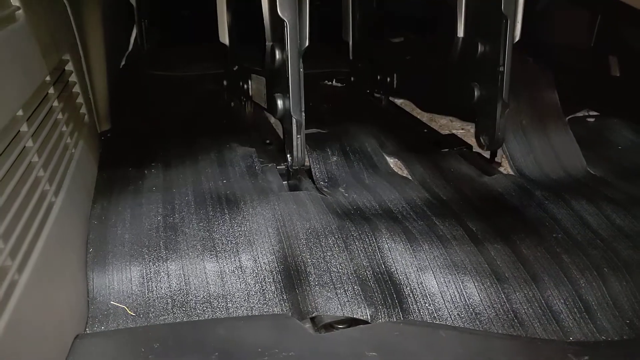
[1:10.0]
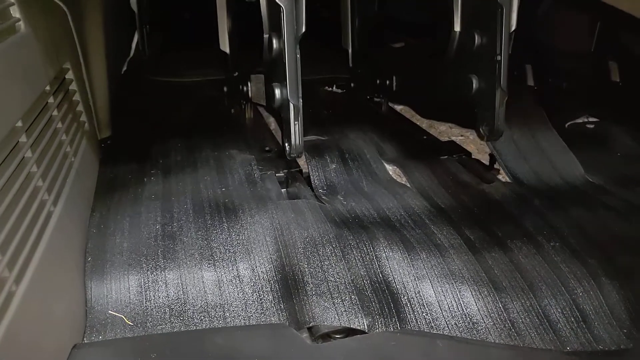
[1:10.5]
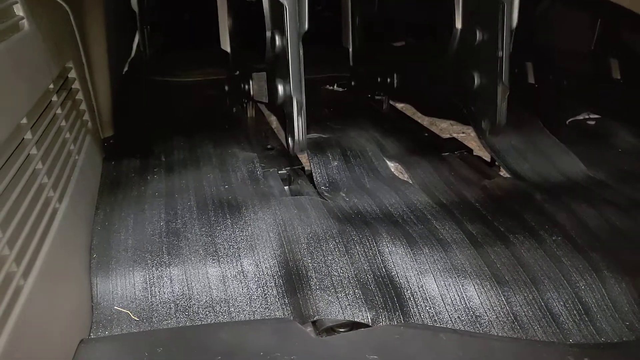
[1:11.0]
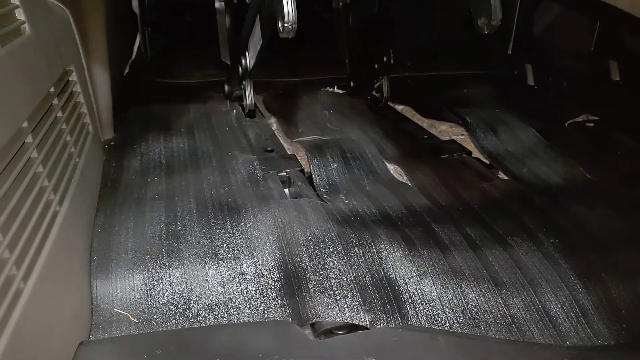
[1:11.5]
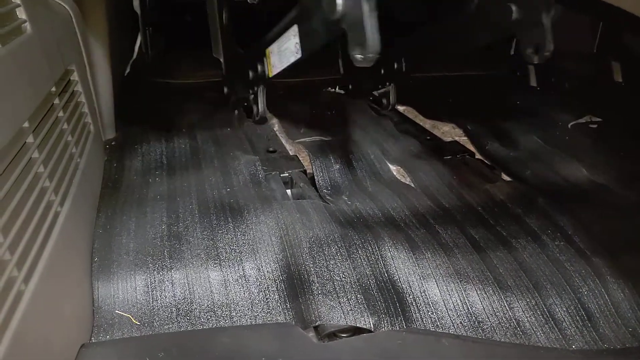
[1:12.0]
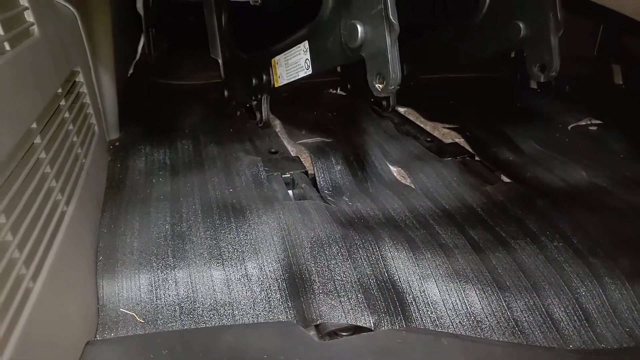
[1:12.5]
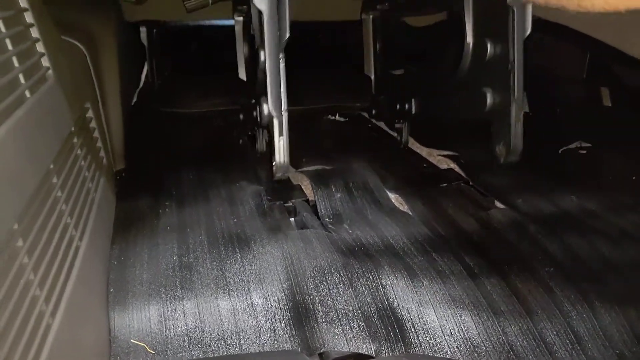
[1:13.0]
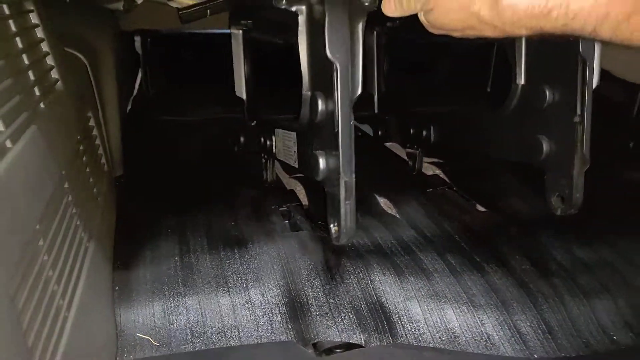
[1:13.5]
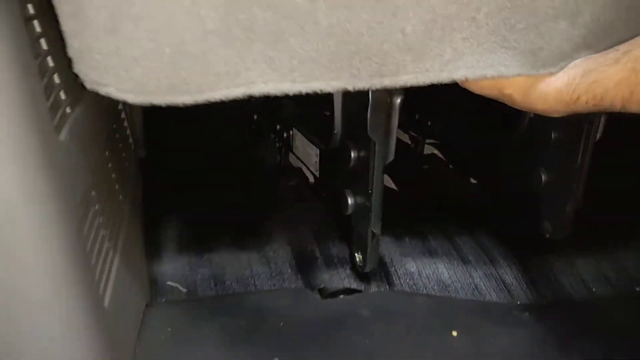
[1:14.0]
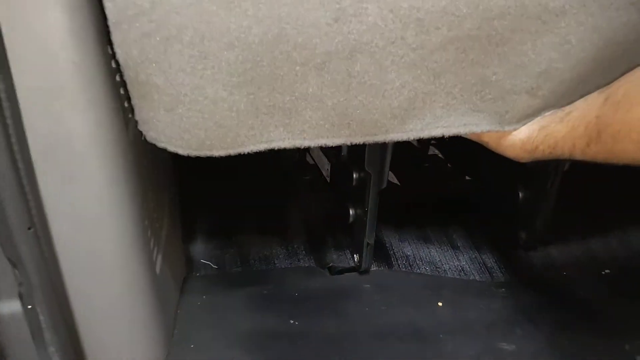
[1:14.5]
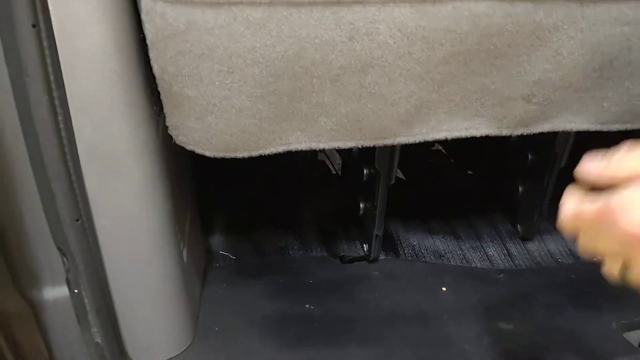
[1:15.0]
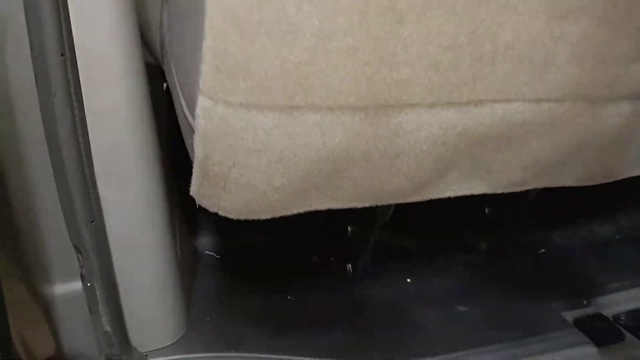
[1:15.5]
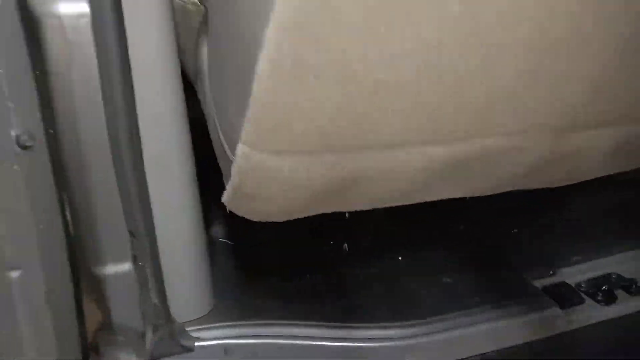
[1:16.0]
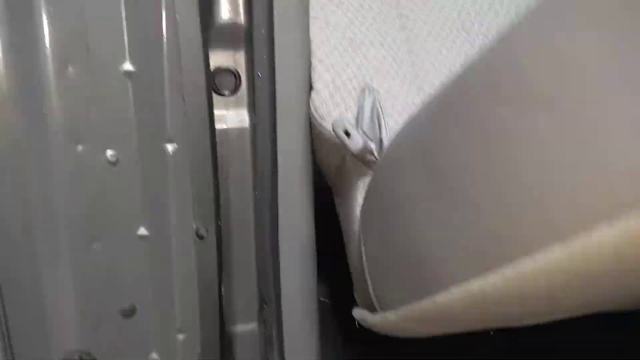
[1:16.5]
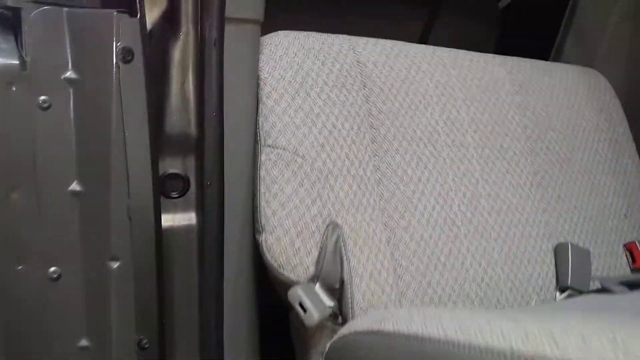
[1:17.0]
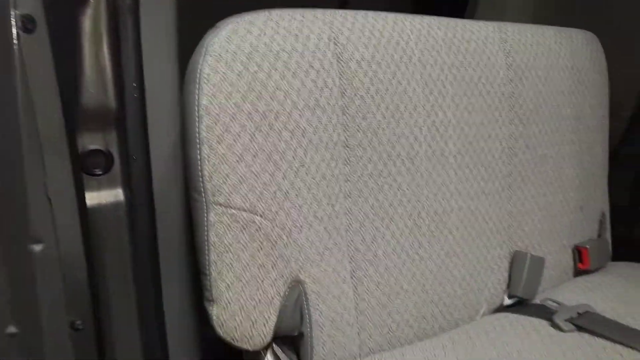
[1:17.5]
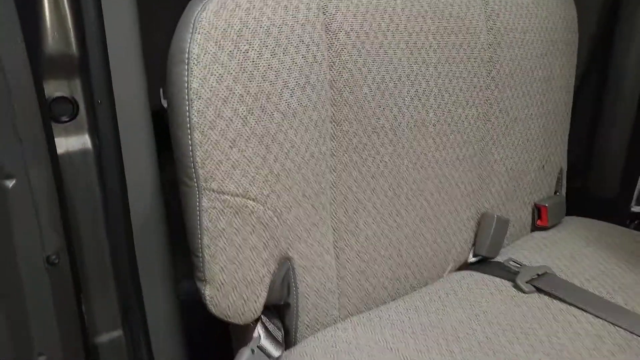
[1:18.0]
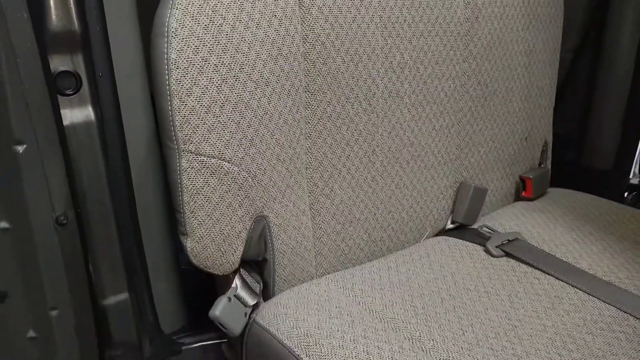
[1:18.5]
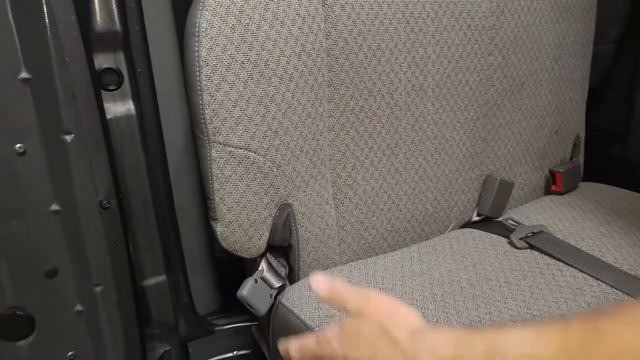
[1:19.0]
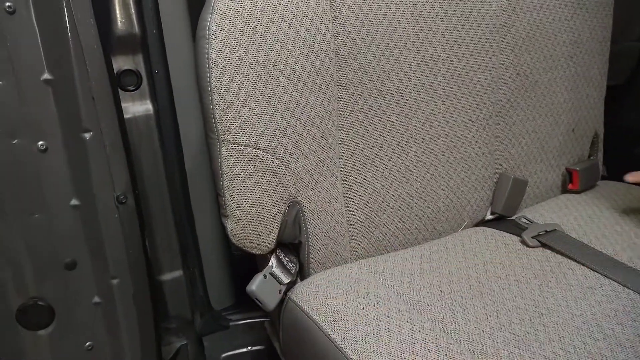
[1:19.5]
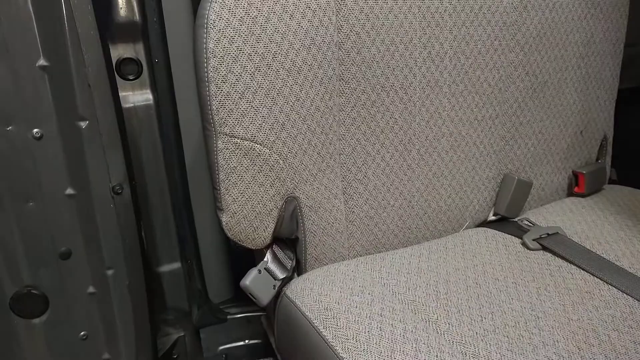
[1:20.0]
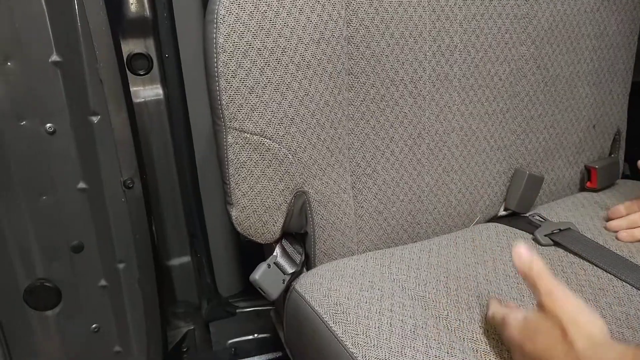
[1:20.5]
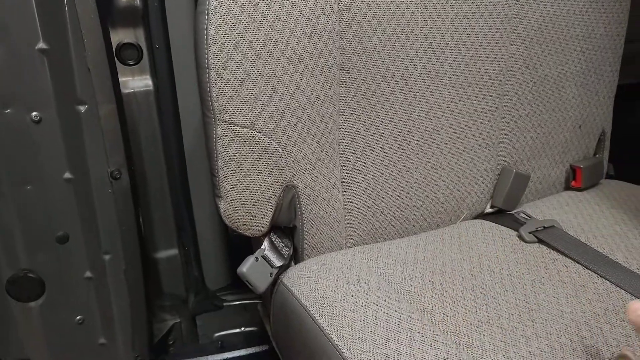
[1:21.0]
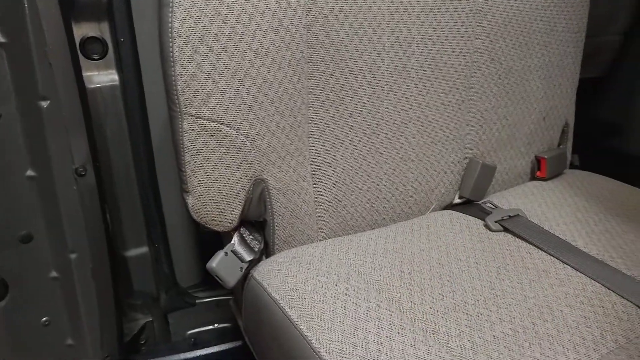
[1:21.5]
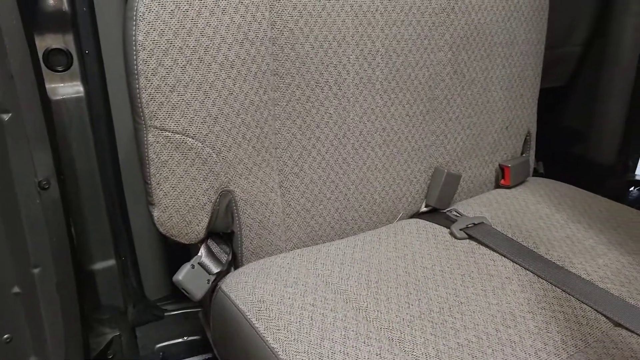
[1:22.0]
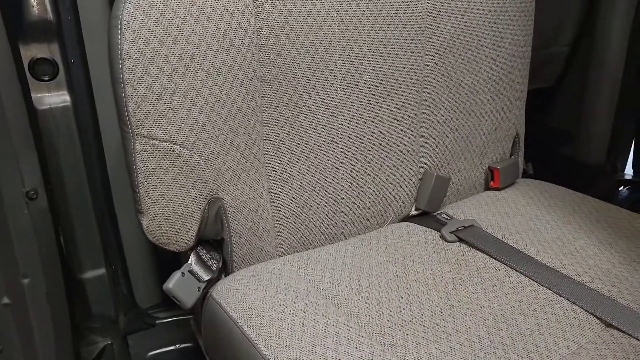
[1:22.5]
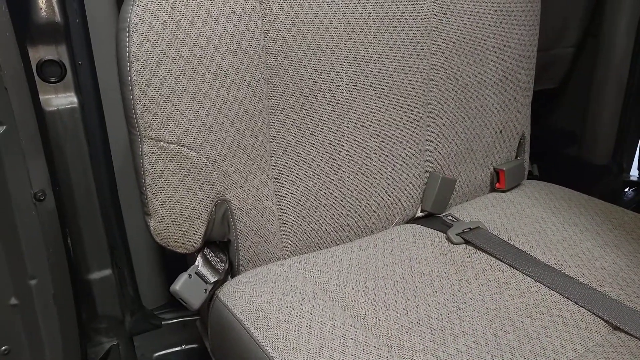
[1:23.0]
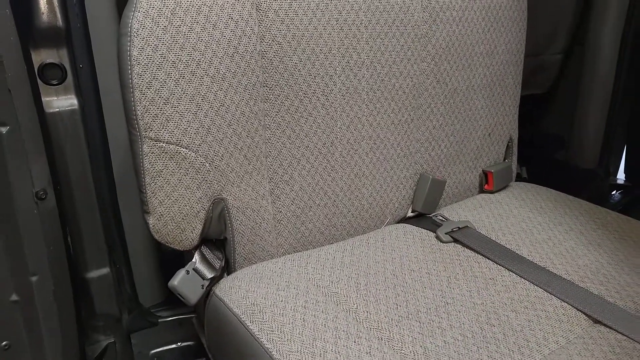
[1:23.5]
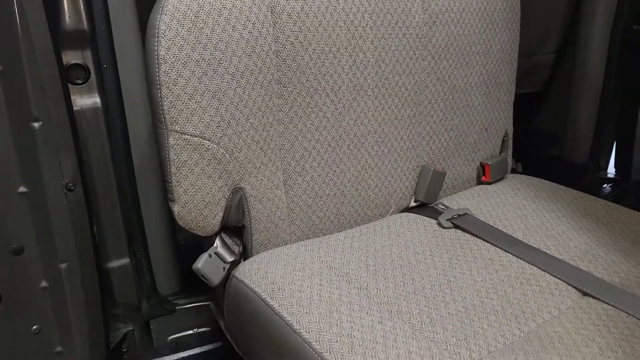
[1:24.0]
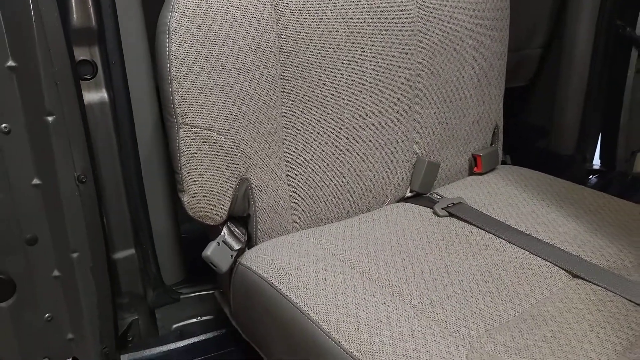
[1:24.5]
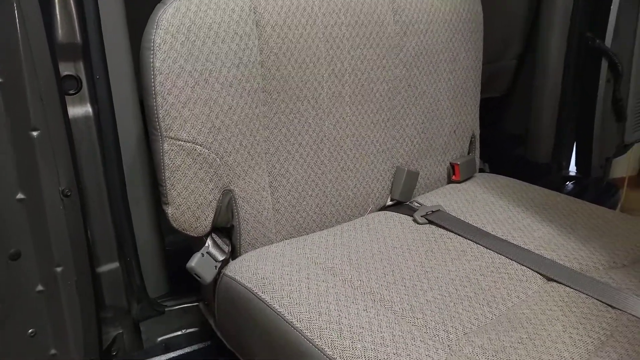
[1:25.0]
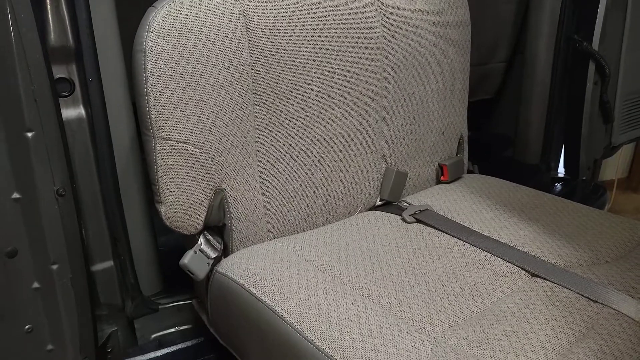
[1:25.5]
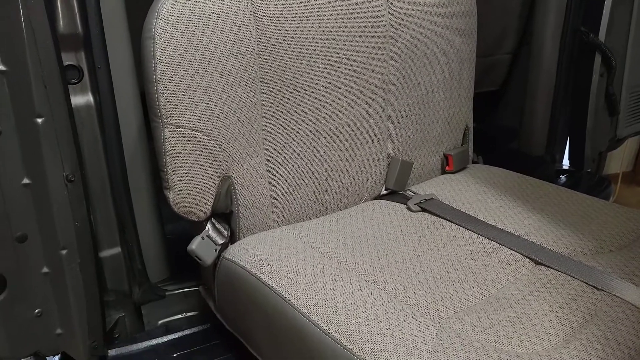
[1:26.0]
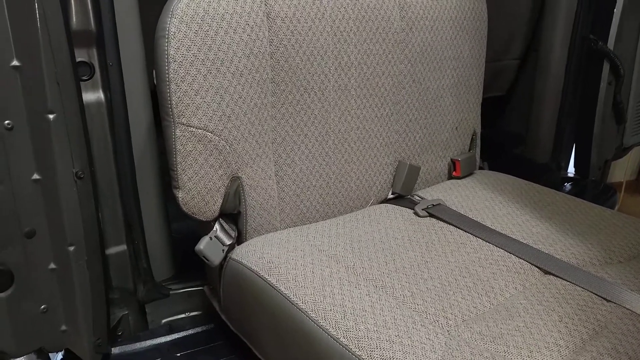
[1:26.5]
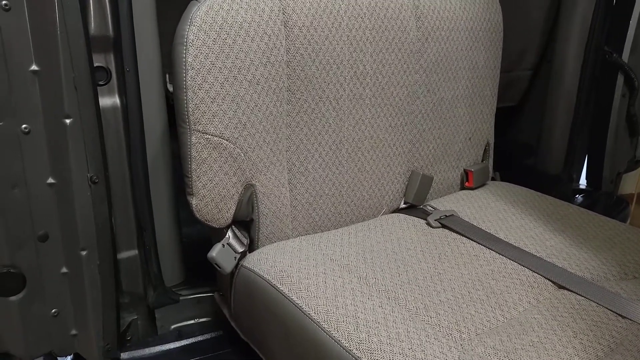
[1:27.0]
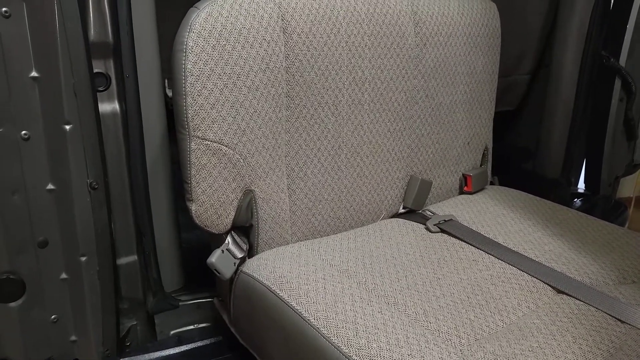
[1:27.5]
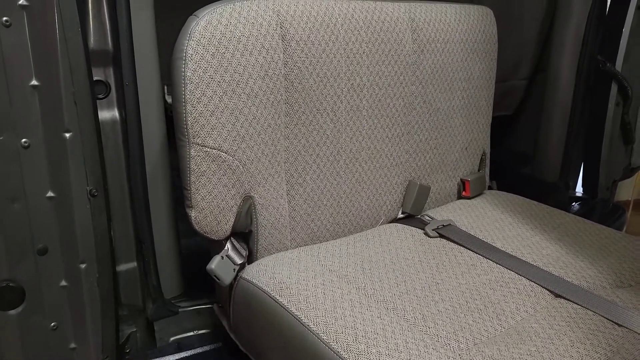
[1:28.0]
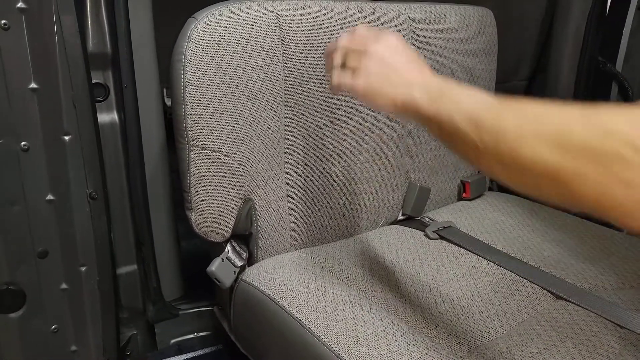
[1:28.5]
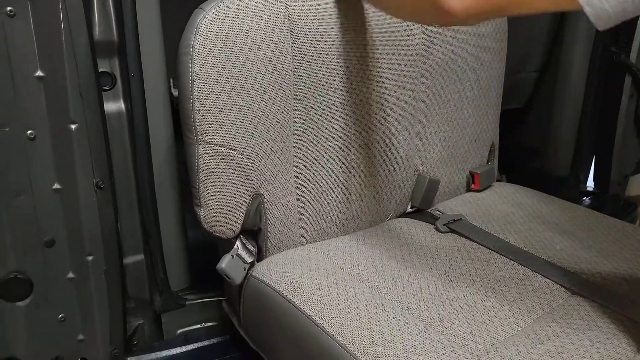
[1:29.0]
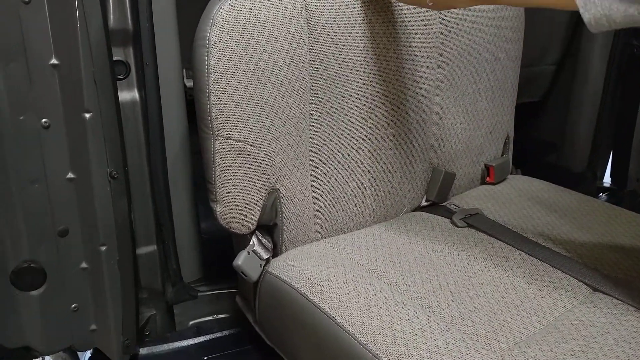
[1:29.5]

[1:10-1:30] The person pulls the seat upwards from its mounting and towards the rear of the vehicle. They tip the seat onto its back, with the seat itself in a vertical orientation, showing that it is a bench seat rather than two or three individual seats. The seat is covered in a grey or beige patterned cloth and shows the position of three seat belt receptors as well as the seat belt for the middle passenger. The hands move in an animated way, suggesting the person is continuing to talk about the seat or how it is withdrawn from the vehicle. Finally, the person grasps the top edge of the seat with their left hand and removes the whole seat from the vehicle, lifting it toward the rear and moving it left out of shot.